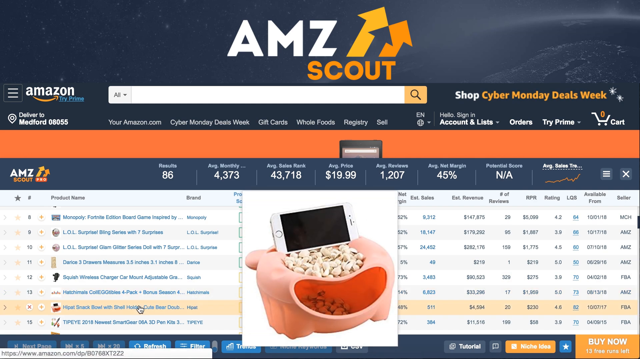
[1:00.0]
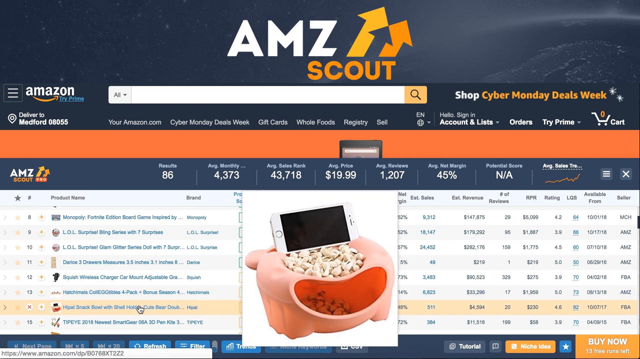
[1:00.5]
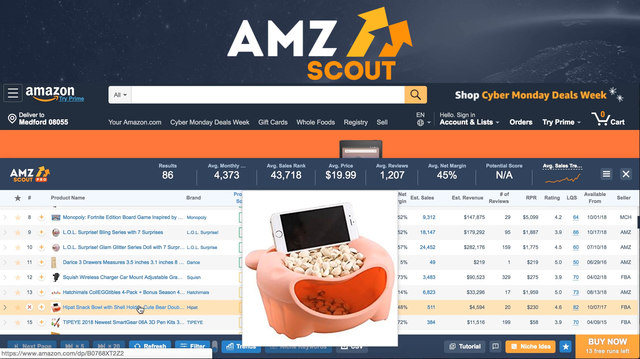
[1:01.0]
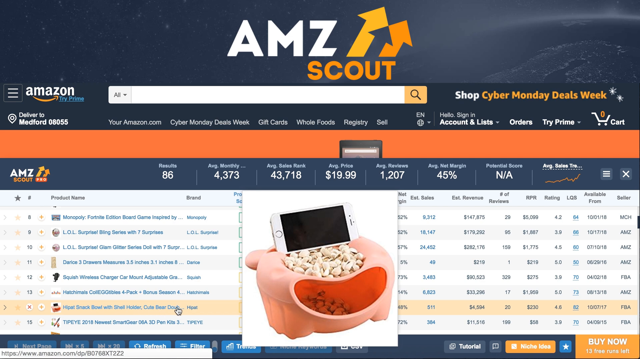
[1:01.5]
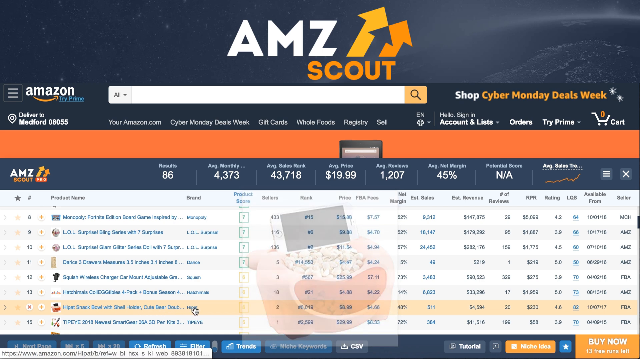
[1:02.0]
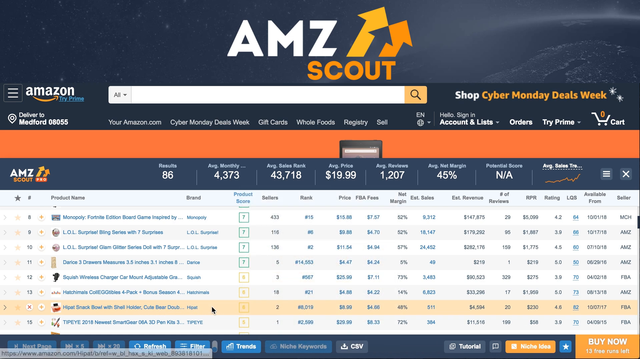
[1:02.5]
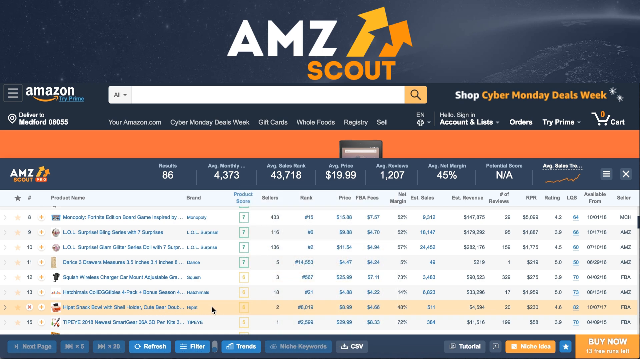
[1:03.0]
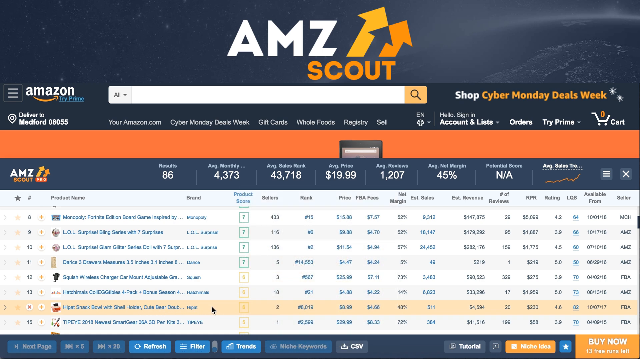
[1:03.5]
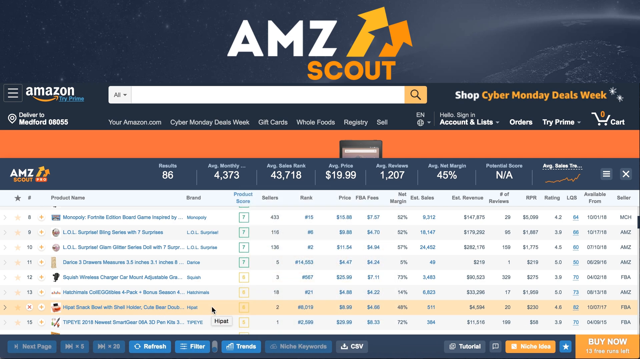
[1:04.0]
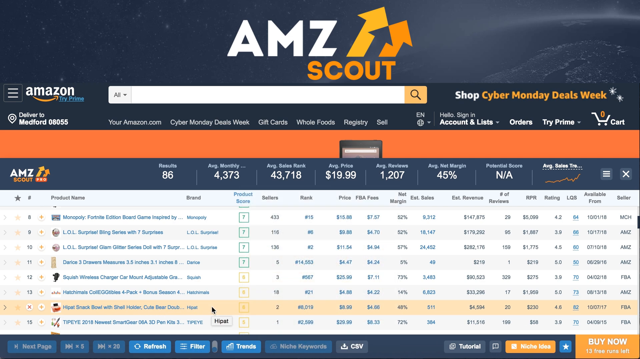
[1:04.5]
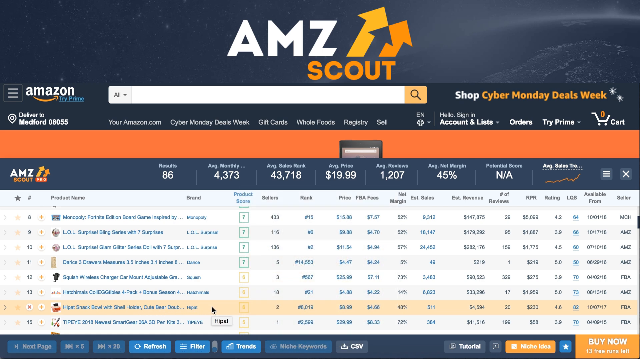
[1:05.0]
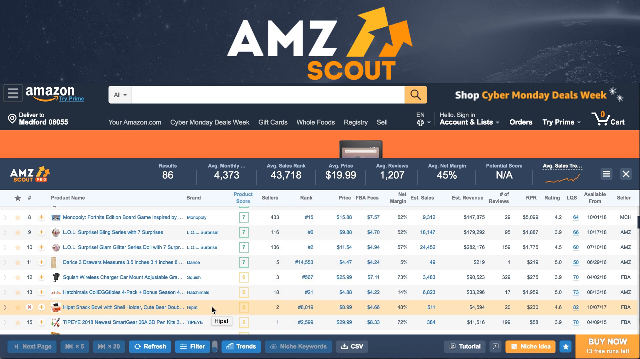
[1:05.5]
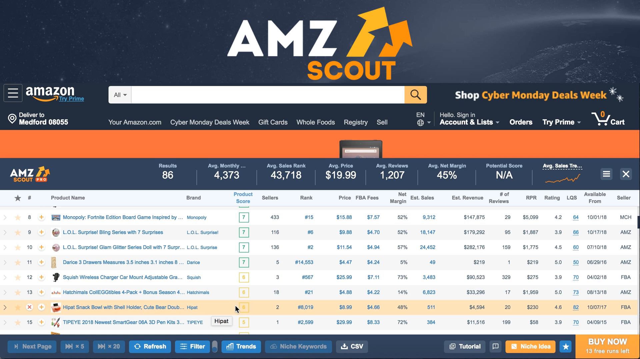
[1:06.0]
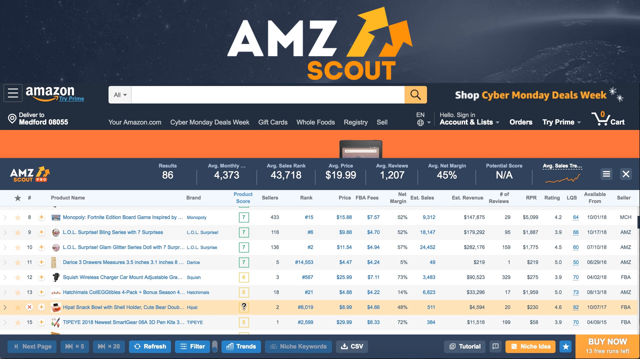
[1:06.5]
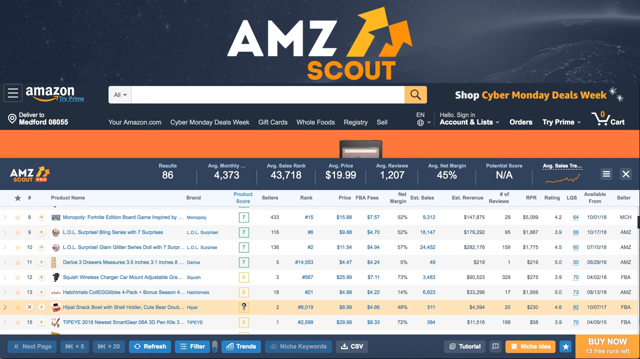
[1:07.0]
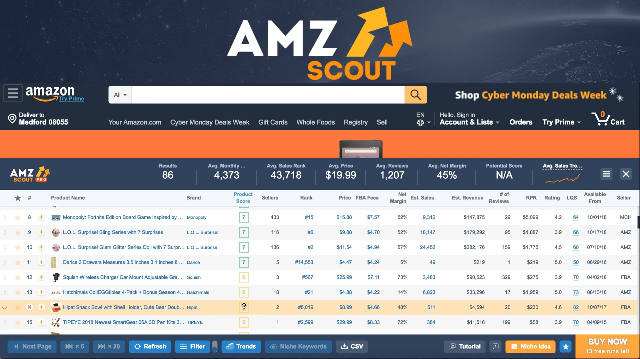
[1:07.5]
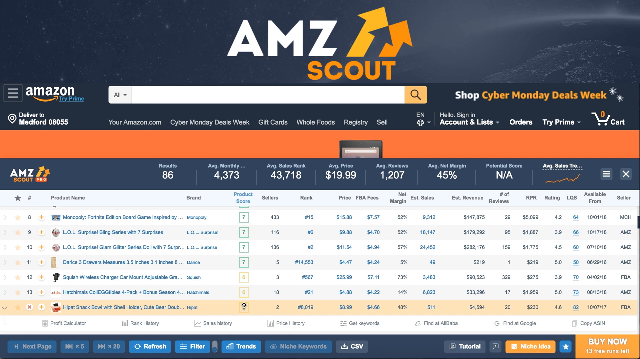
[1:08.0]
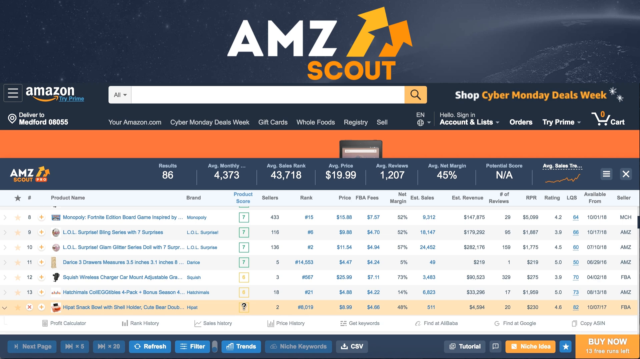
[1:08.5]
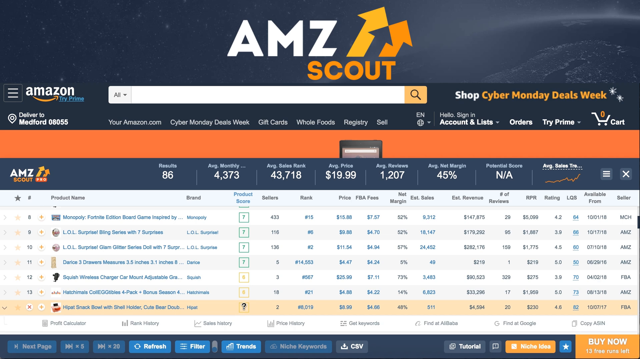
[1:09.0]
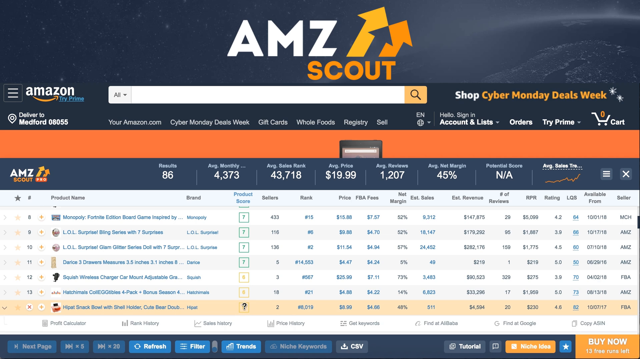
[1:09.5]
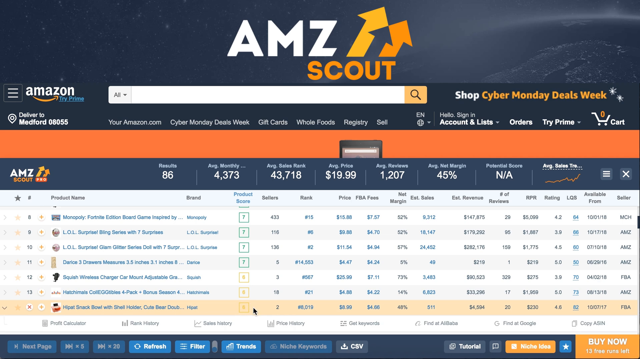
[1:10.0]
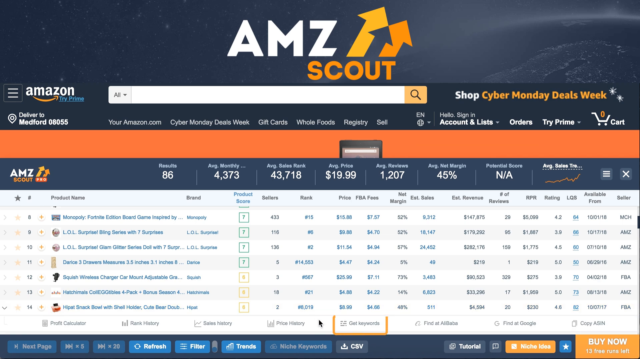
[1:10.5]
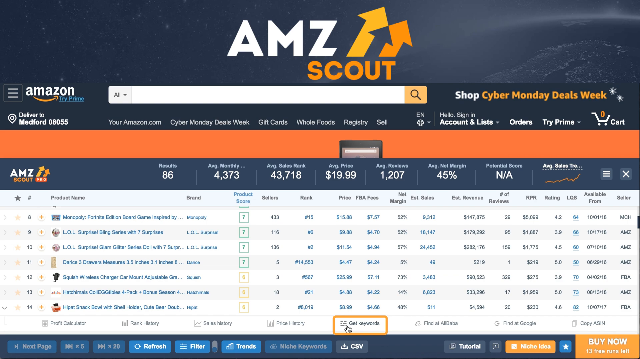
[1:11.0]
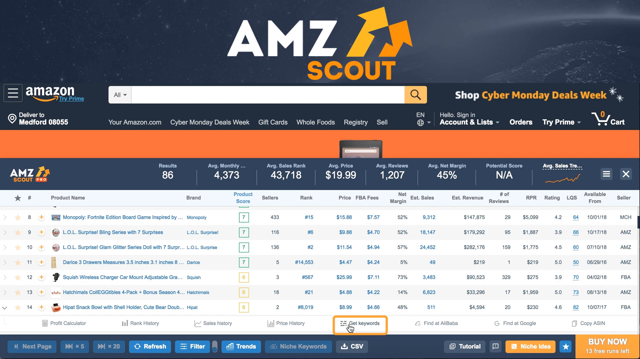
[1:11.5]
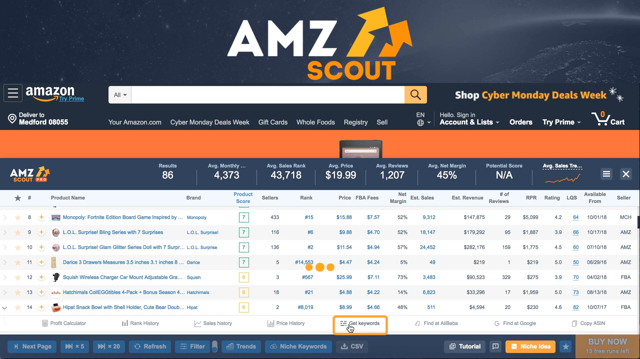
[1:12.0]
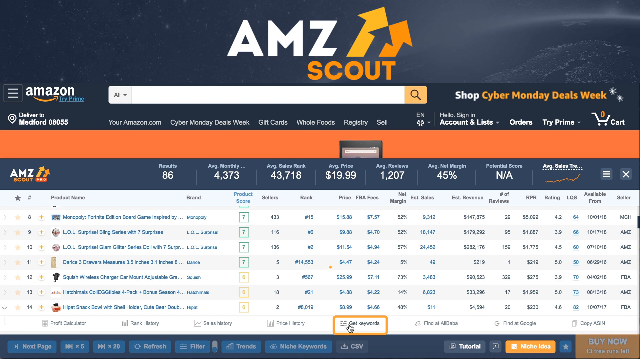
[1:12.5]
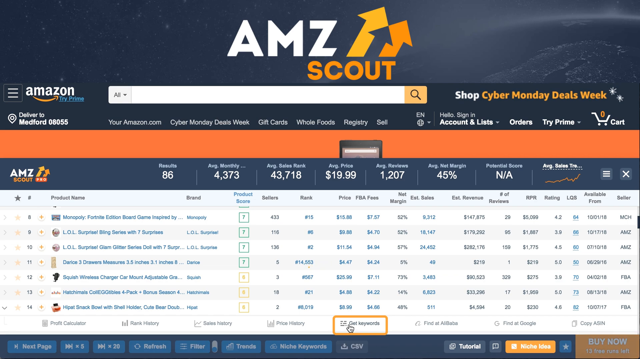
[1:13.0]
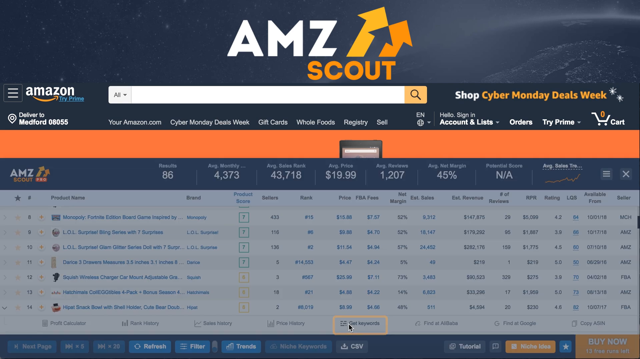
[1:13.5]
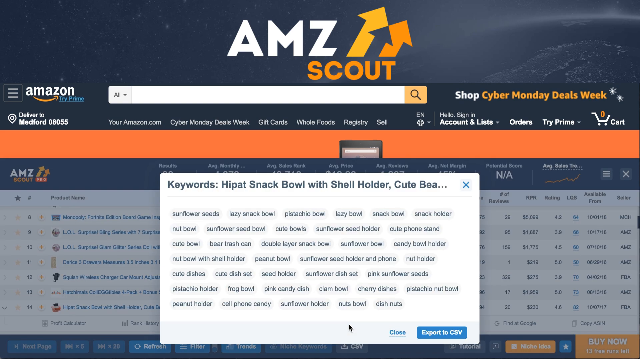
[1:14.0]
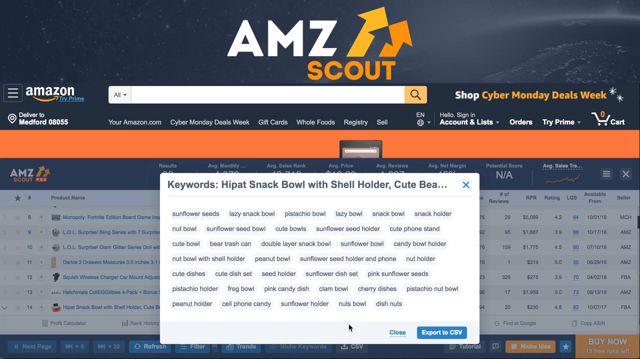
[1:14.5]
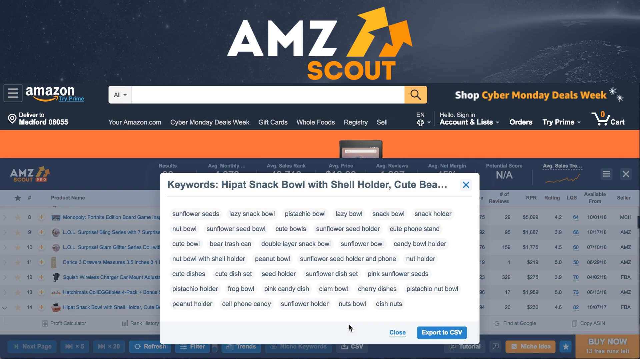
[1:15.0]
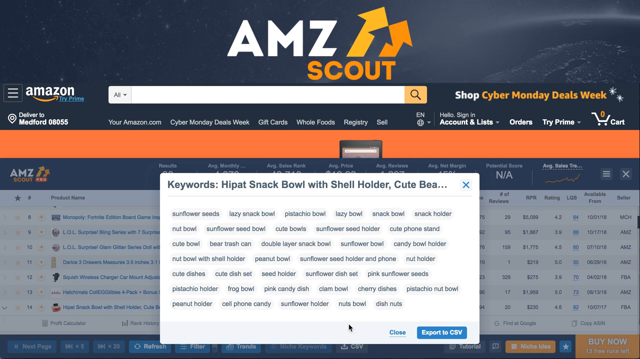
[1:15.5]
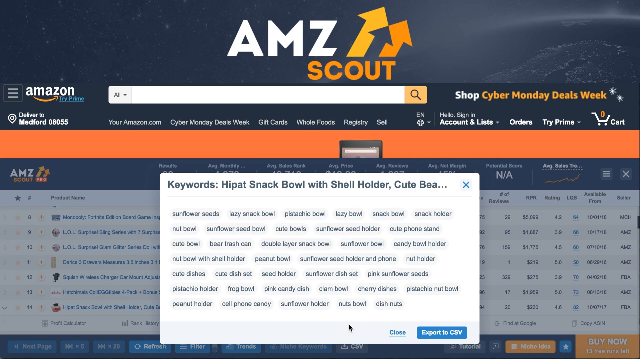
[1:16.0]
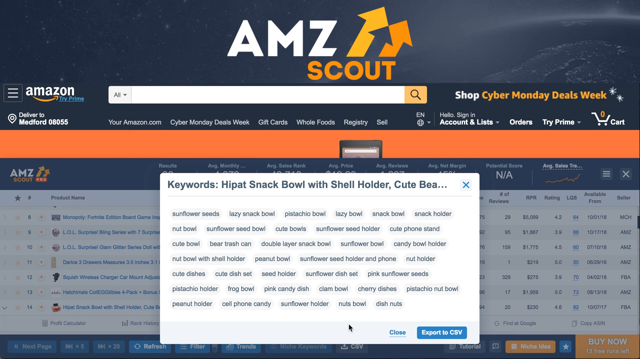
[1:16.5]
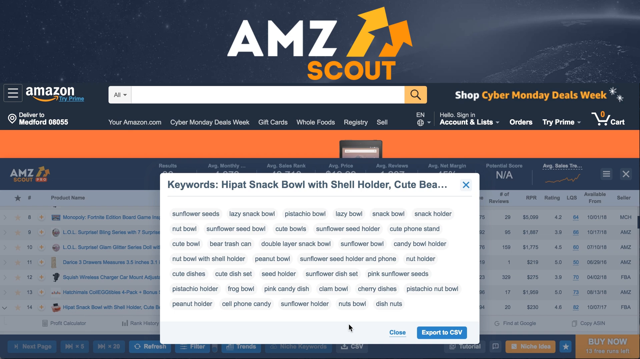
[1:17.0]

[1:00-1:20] AMZ Scout is shown over the Amazon website during Cyber Monday deals week, with a menu added to the page listing products' average monthly sales, average sales rank, average prices, average reviews, average net margins and potential scores. The cursor hovers over a snack bowl that holds a cell phone, with snacks on top as well as inside. It moves over a question mark, then over to get keywords, and ellipses show that it is working. The snack bowl with shell holder comes up, followed by a set of keywords such as sunflower seeds, double-layer snack bowl, nut holder, pink candy dish, cherry dishes, pistachio nut bowl, cell phone, candy and peanut holder.